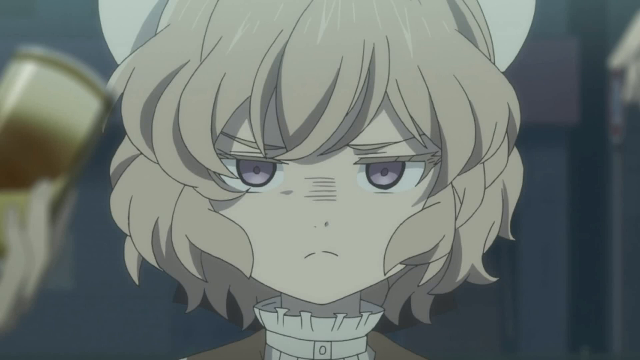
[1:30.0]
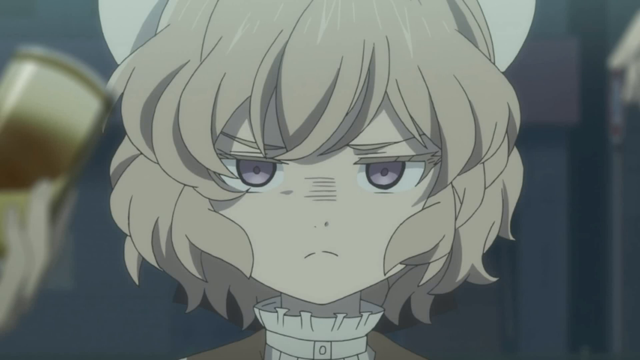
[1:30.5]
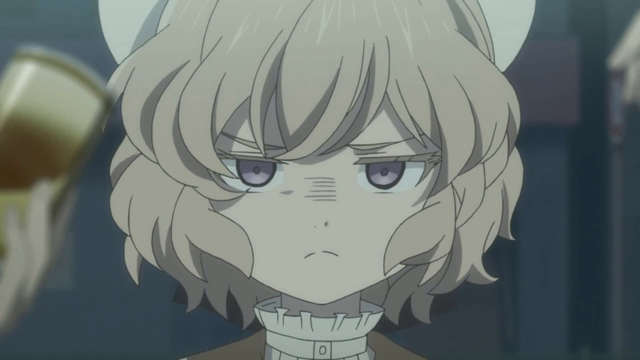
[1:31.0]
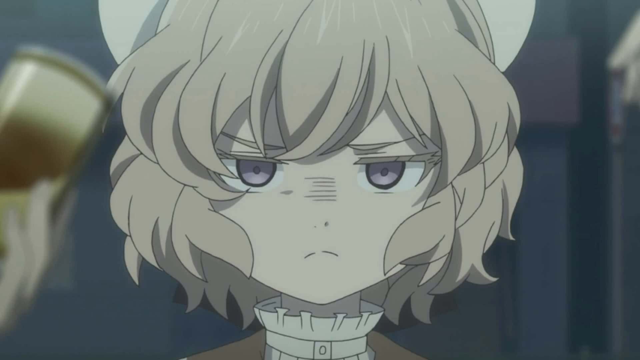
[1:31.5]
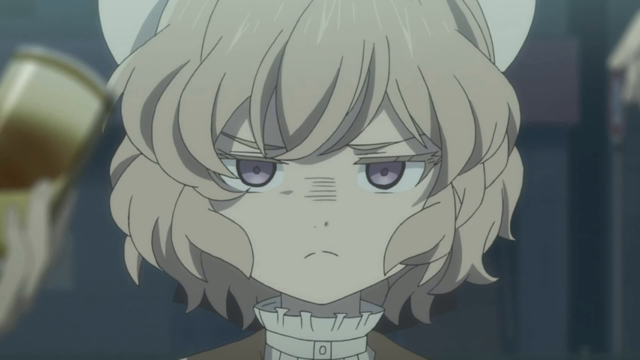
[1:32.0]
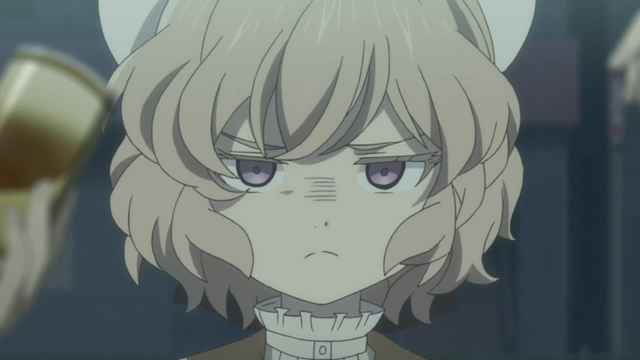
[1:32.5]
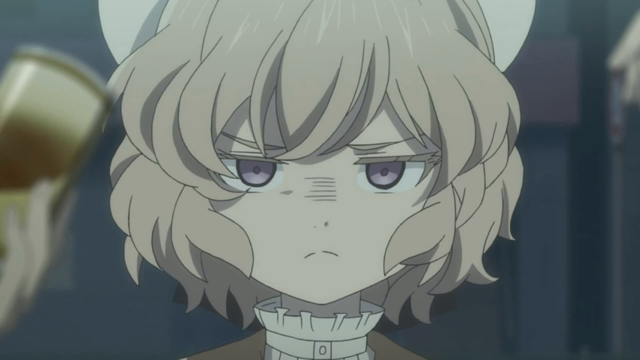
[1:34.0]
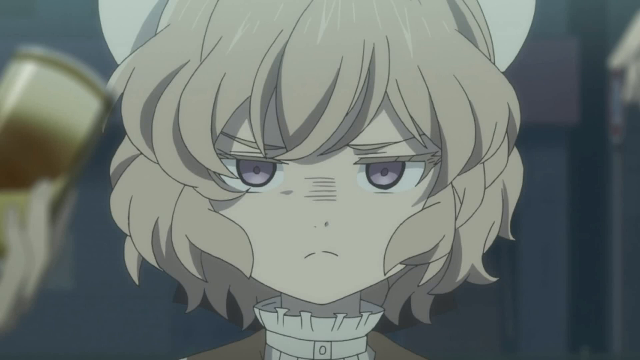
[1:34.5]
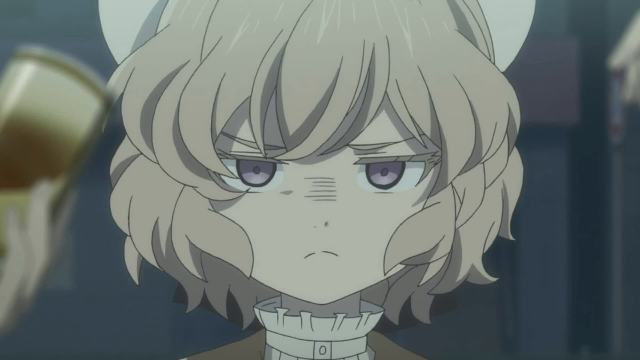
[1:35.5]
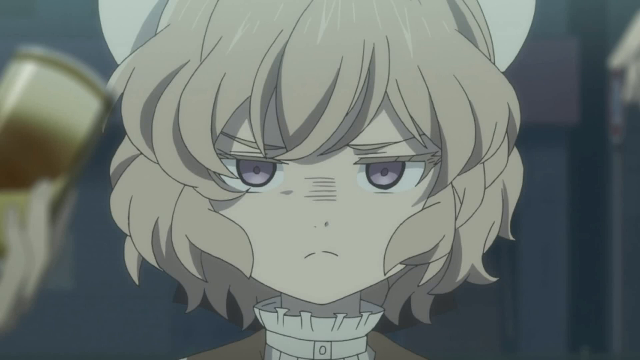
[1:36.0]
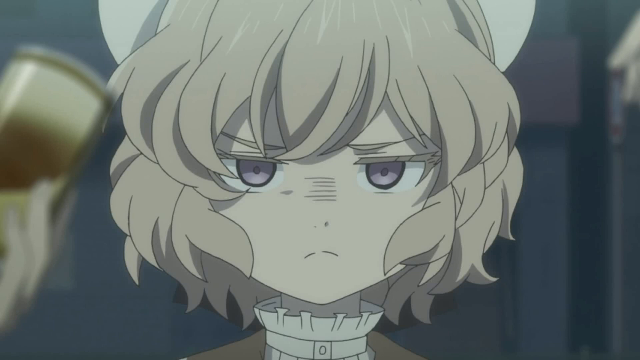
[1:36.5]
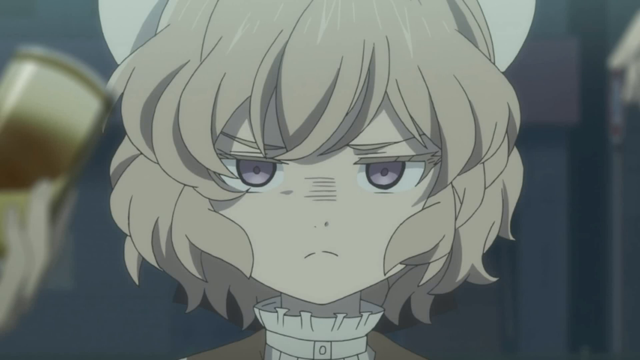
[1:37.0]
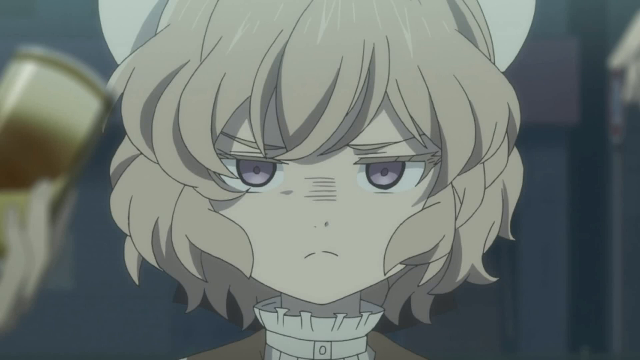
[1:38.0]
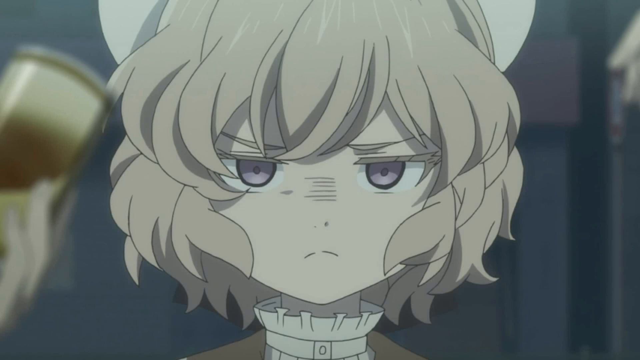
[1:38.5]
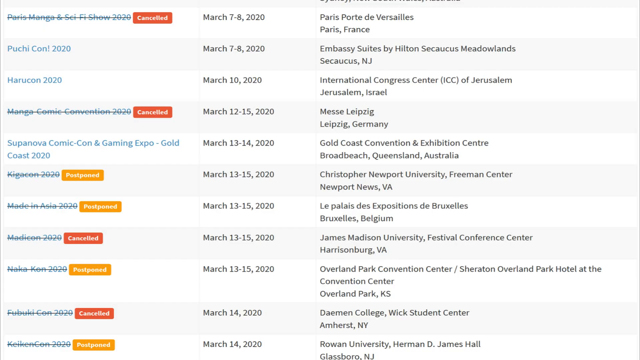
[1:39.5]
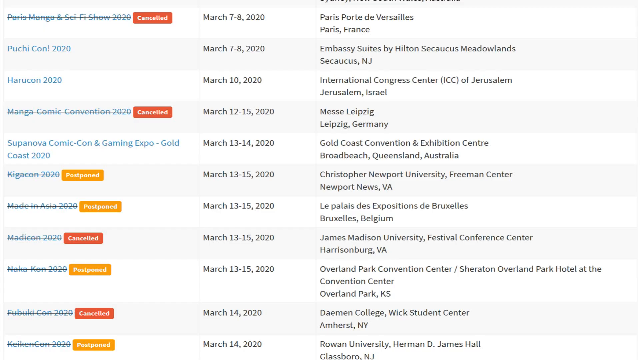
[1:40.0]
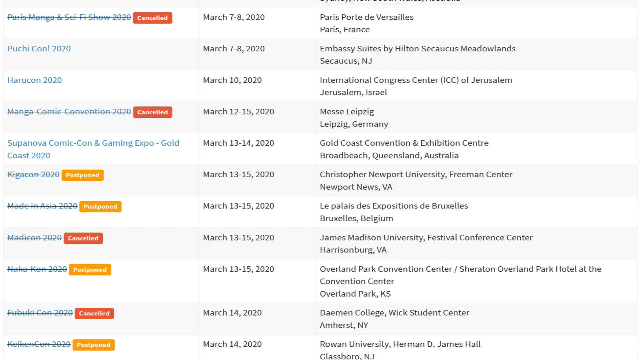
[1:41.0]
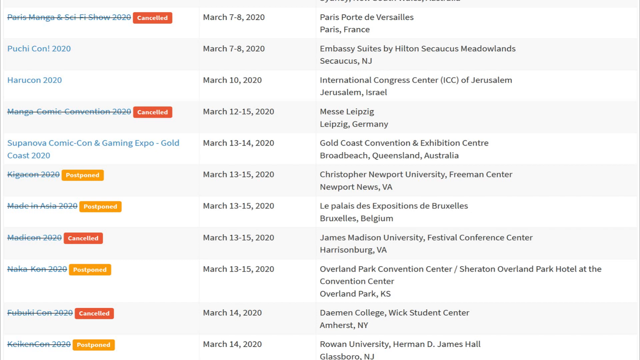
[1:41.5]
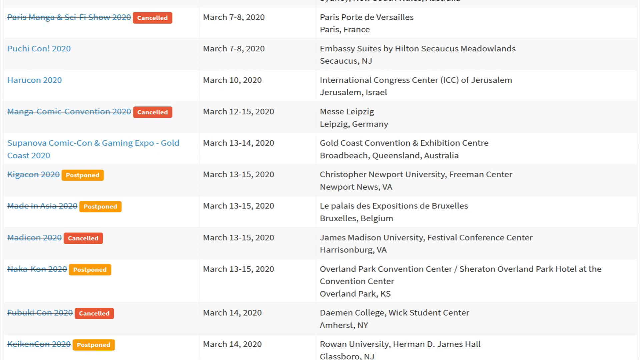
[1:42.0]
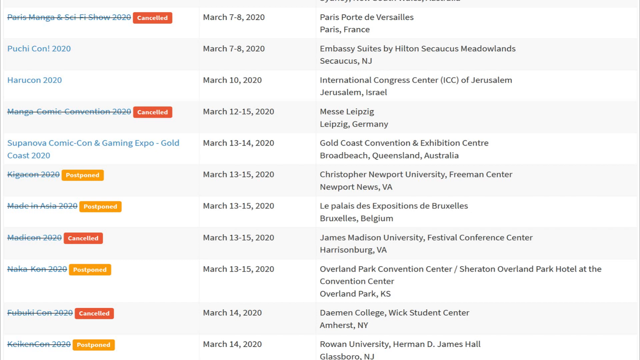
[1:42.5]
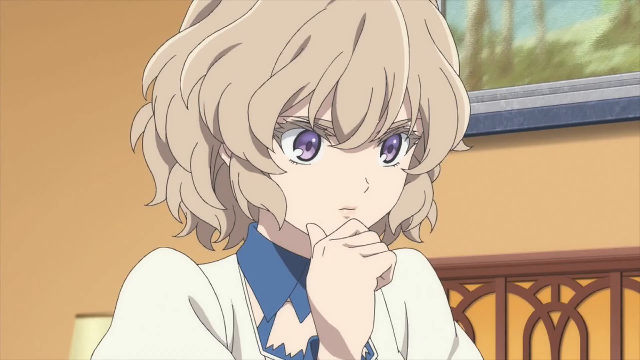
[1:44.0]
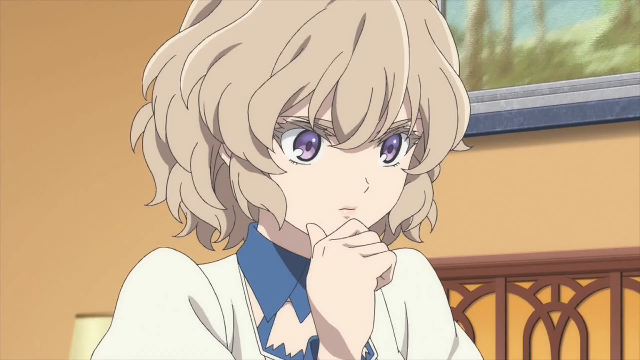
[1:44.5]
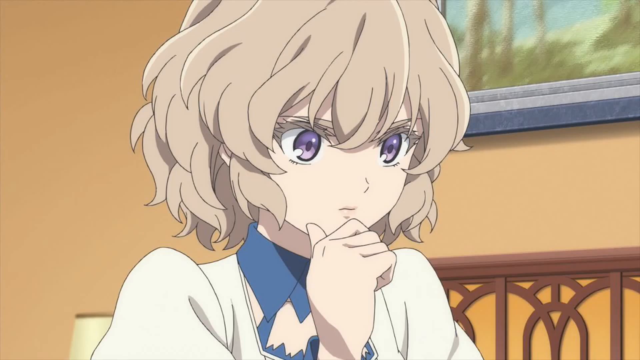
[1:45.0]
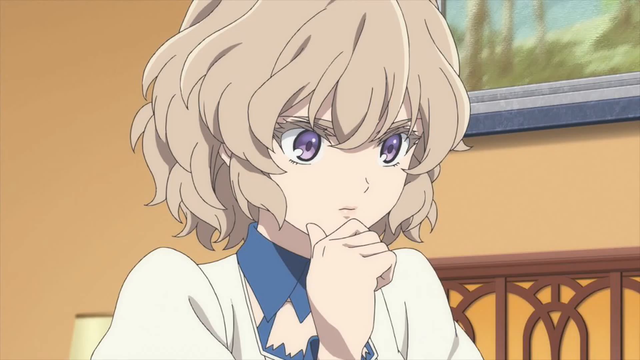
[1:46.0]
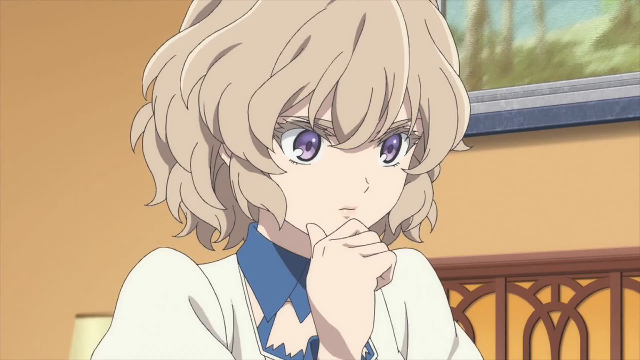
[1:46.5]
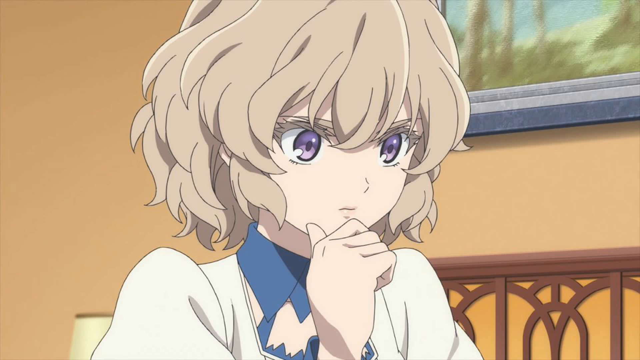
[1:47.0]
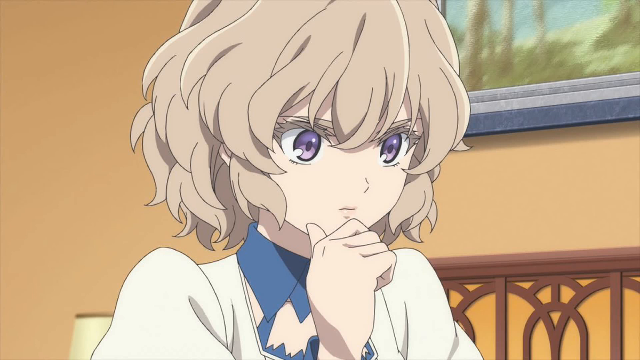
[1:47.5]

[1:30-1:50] An animated young girl, probably in her late teens or 20s, has short blonde hair, big blue eyes and two white buns on top of her head. She looks very angry and displeased, with stressed eyebrows and her mouth bent down, as she stares at the viewer. She wears a shirt with a white collar that covers maybe about three-quarters of her neck. The scene then transitions to a list. The left side probably shows names; some are crossed out and say "cancel", some are crossed out and say "postpone", and some are not crossed out. The right side lists dates and locations, which are in different states. Lastly, yet another animated girl with short hair and big blue eyes is deep in thought. She wears a white shirt and does not appear to resemble the girl from the previous scene. Behind her are a European-style picture frame and a picture. She puts her hand under her chin as she thinks deeply.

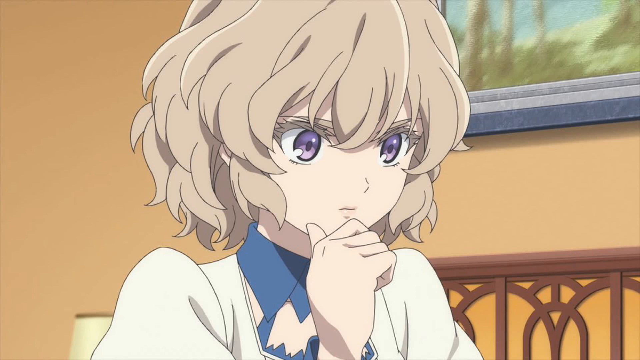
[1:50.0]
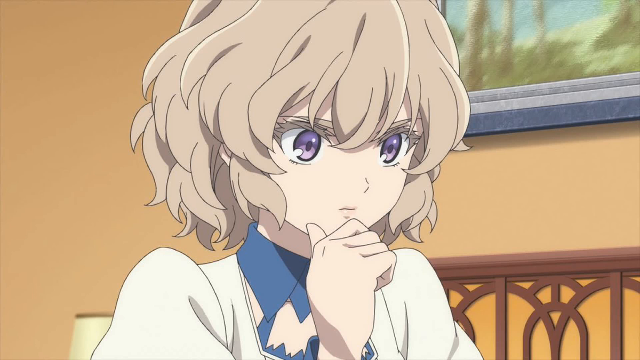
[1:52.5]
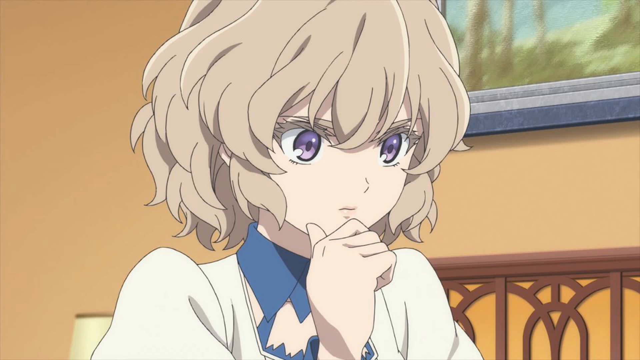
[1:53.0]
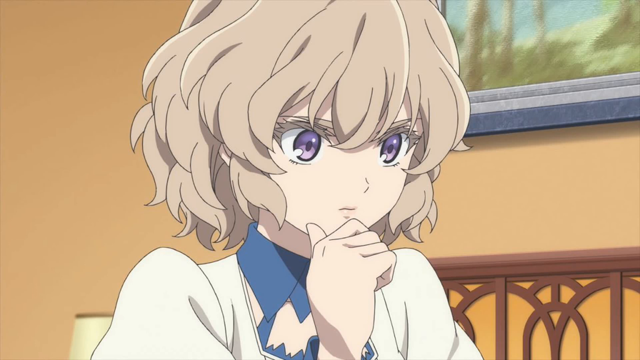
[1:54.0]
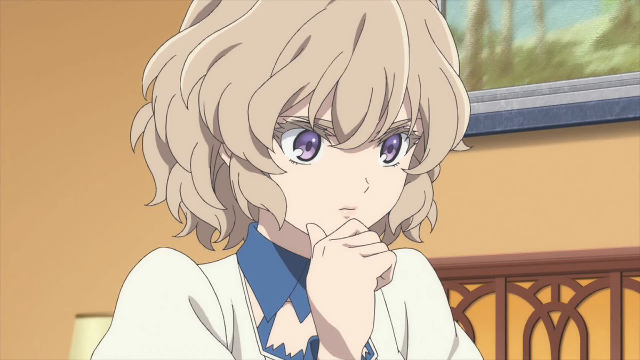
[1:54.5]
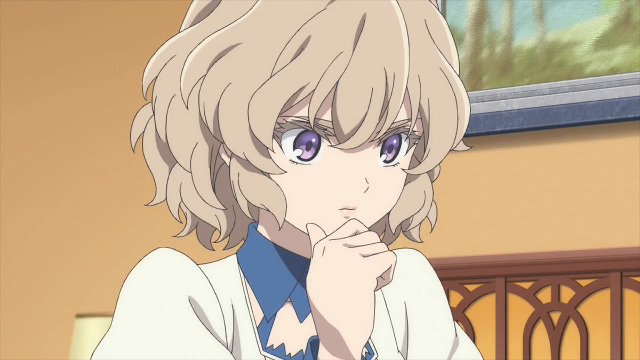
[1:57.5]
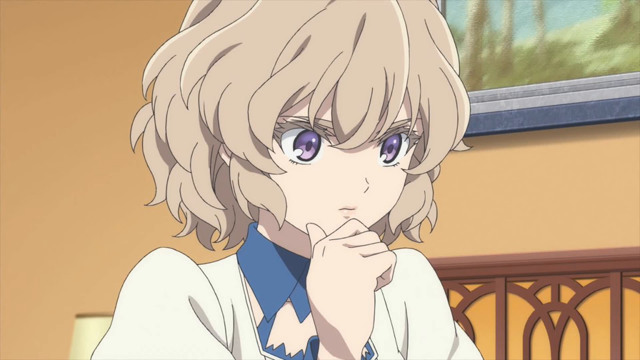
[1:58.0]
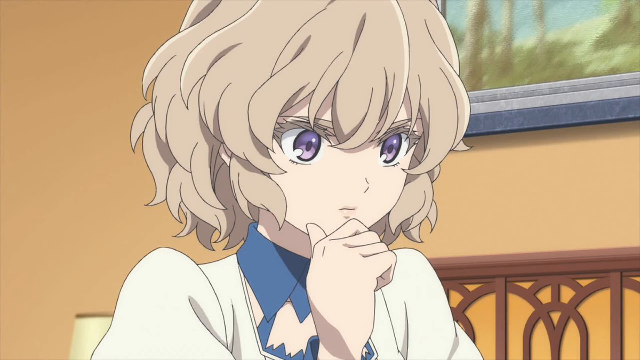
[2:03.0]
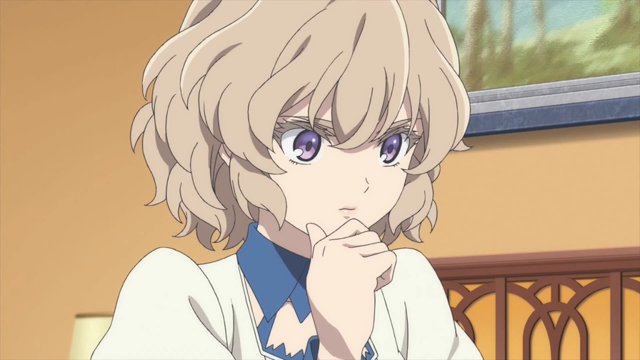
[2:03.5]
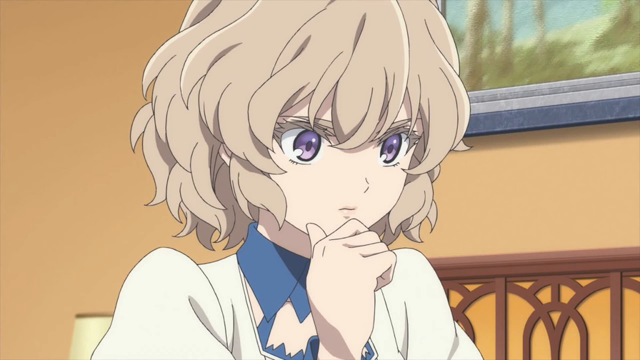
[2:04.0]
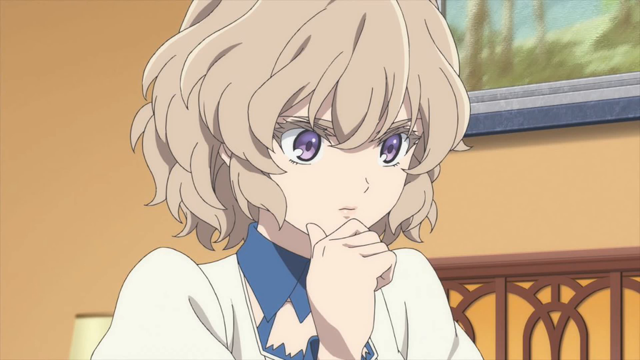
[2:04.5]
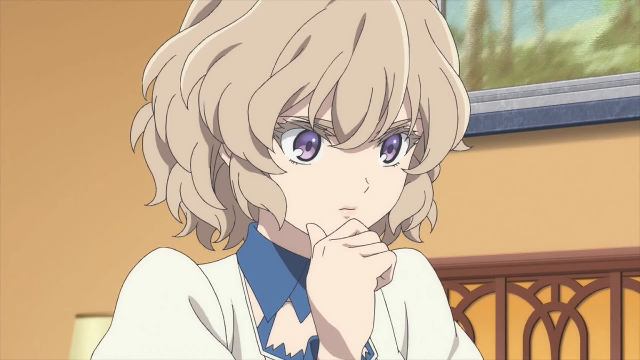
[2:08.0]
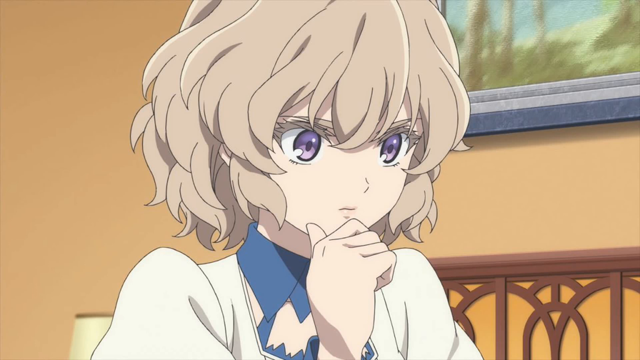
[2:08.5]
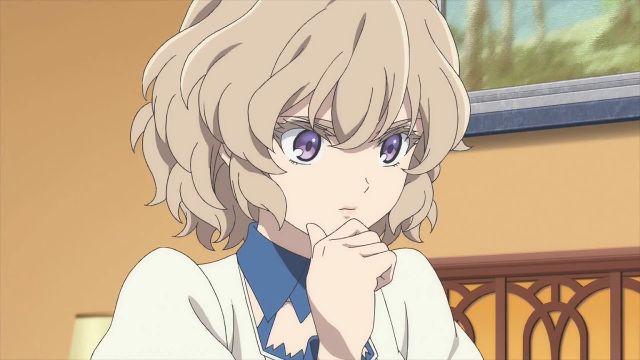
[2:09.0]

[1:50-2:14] An animated girl with short pink hair and big blue eyes is deep in thought, her gaze looking down as she rests her chin on her right hand. She wears a white skirt with a blue collar. In the background are a picture frame with what seems to be a desert scene and some sort of ornamental decoration on an orange wall. A small yellow lamp is beside her, near her back. Her hair is a little curly to the side and just above shoulder length. Her skin is very pale and fair, and she appears to be human.